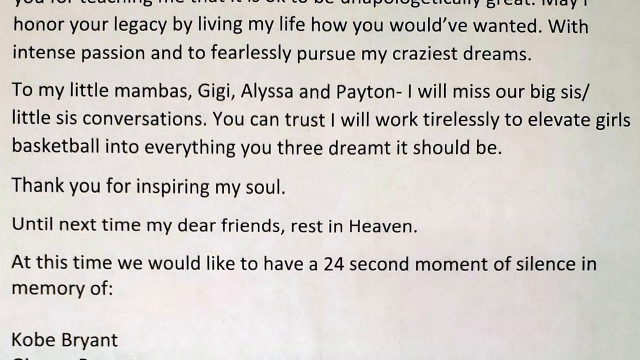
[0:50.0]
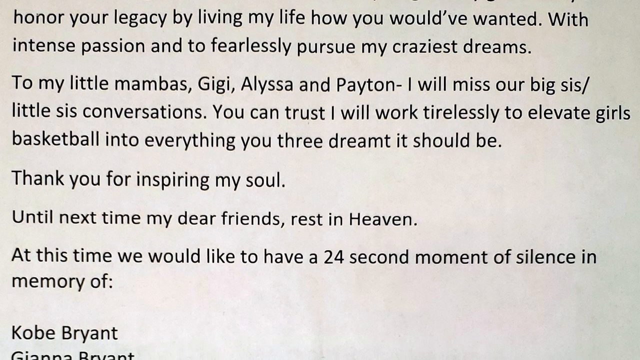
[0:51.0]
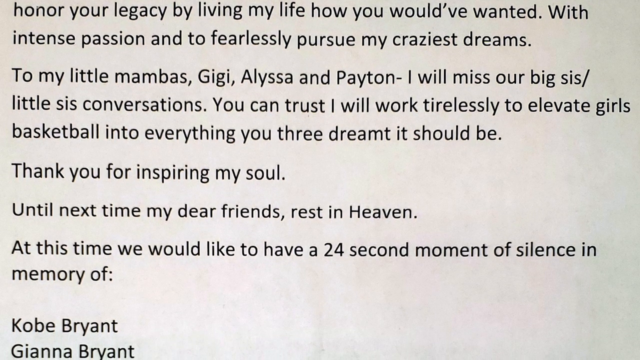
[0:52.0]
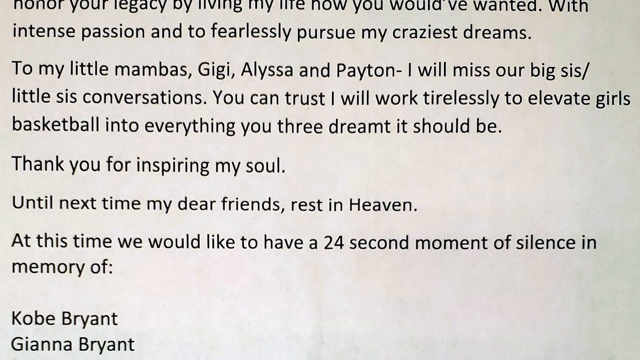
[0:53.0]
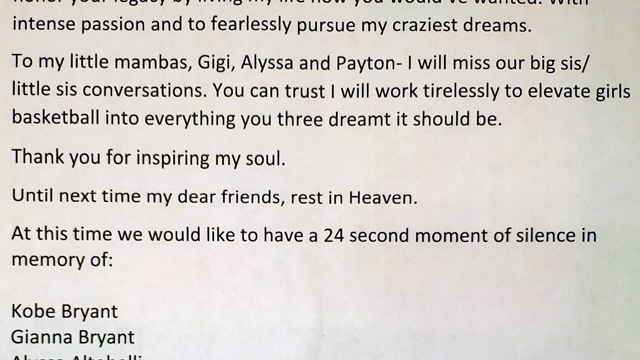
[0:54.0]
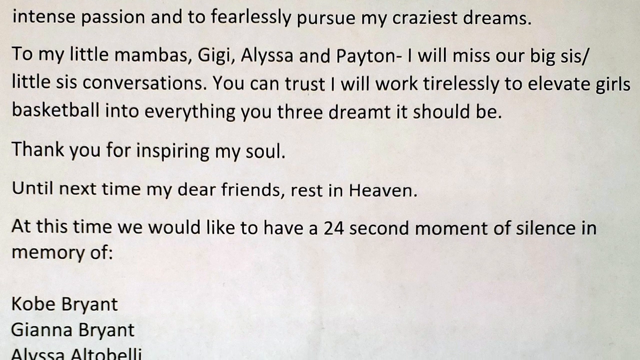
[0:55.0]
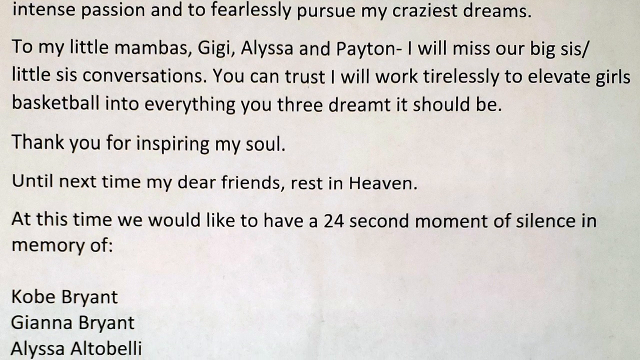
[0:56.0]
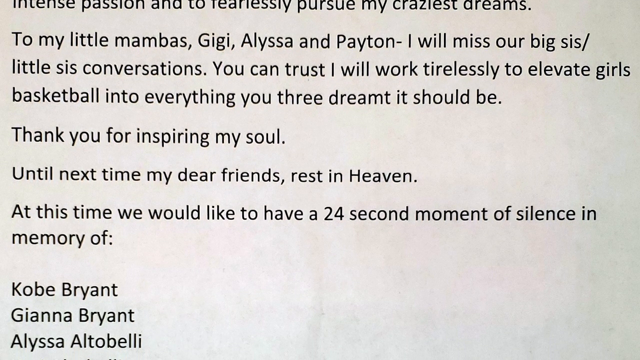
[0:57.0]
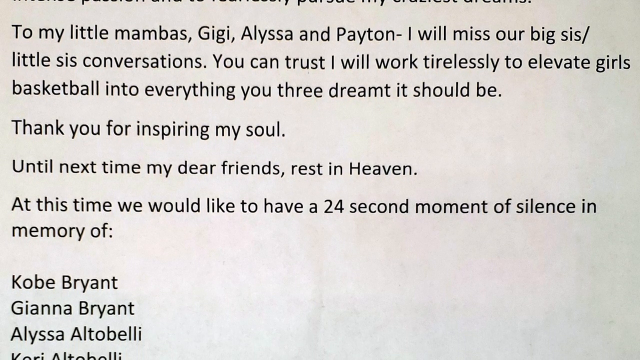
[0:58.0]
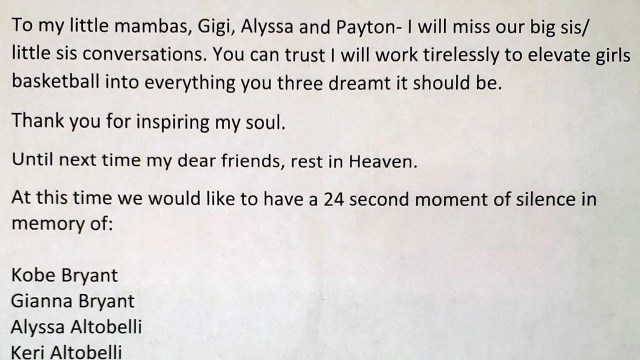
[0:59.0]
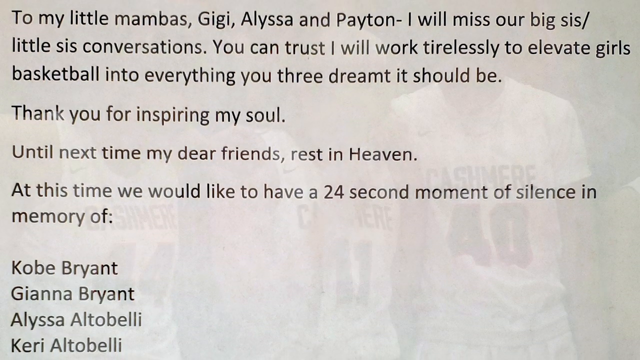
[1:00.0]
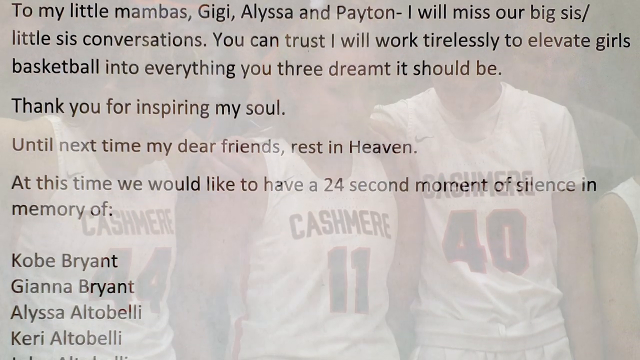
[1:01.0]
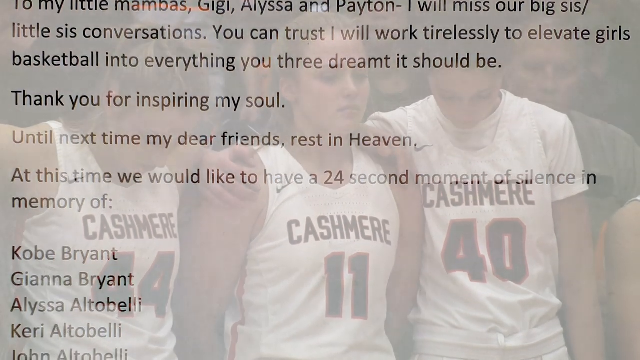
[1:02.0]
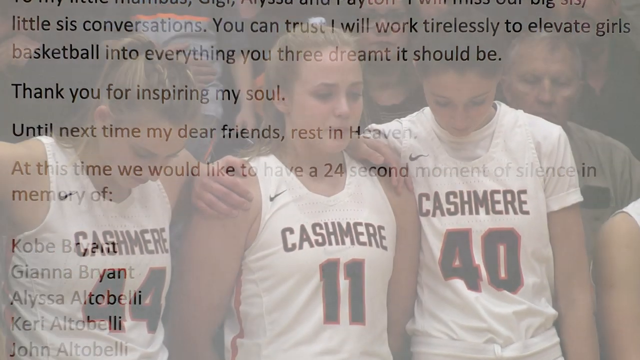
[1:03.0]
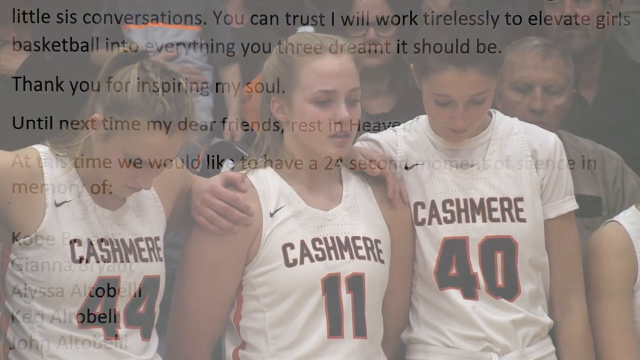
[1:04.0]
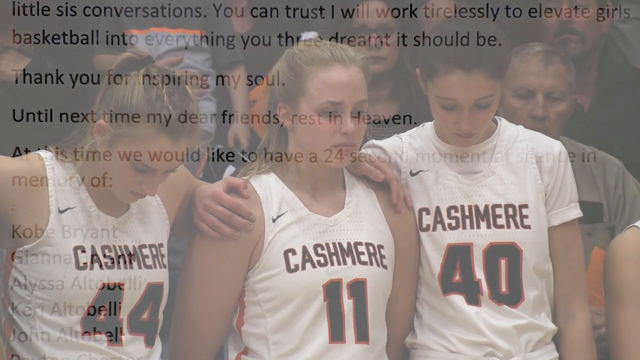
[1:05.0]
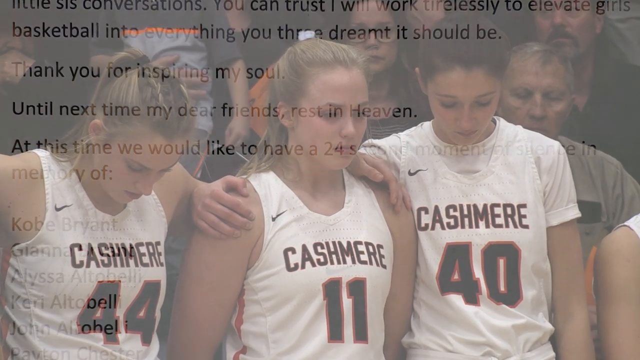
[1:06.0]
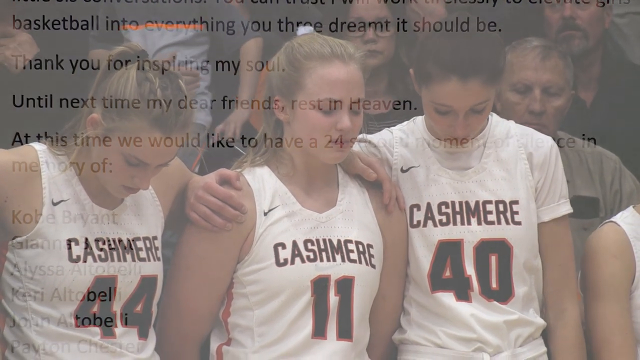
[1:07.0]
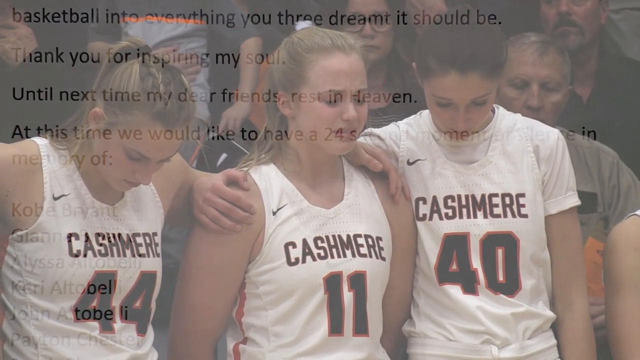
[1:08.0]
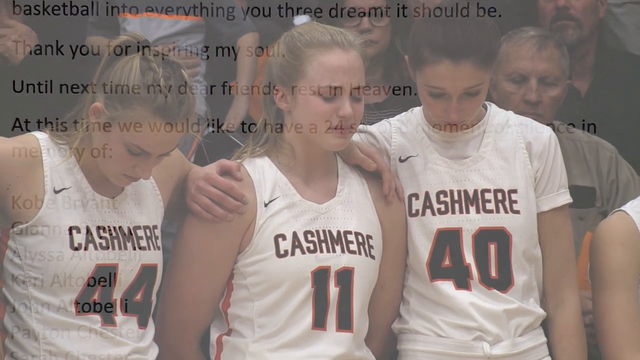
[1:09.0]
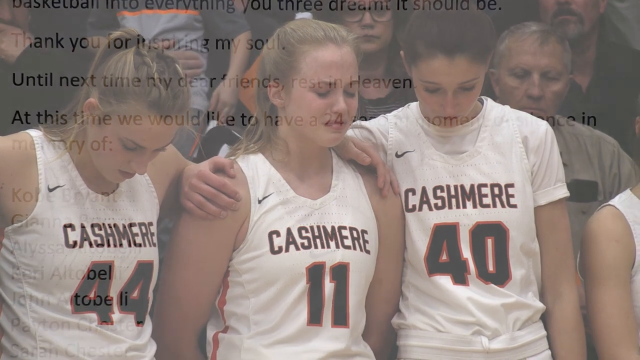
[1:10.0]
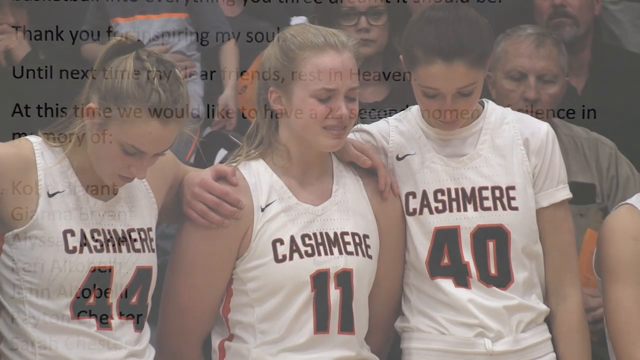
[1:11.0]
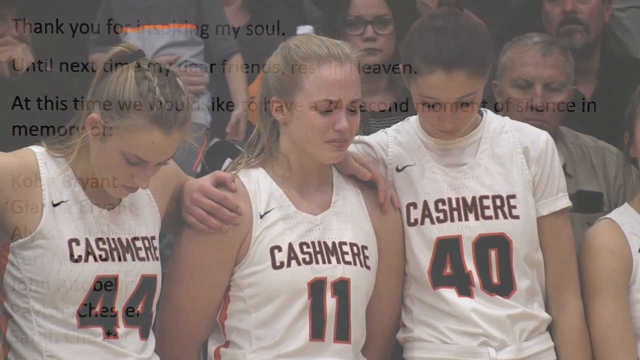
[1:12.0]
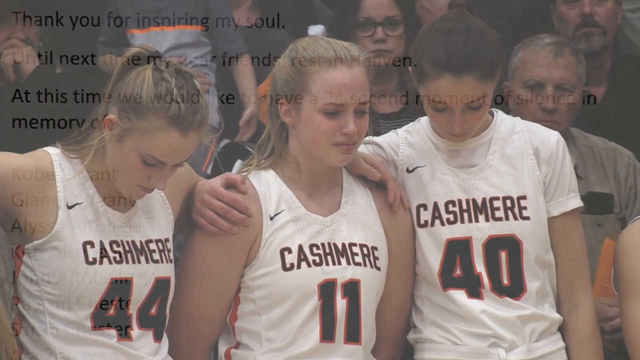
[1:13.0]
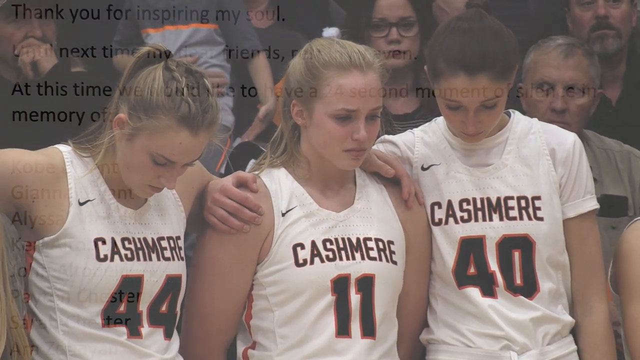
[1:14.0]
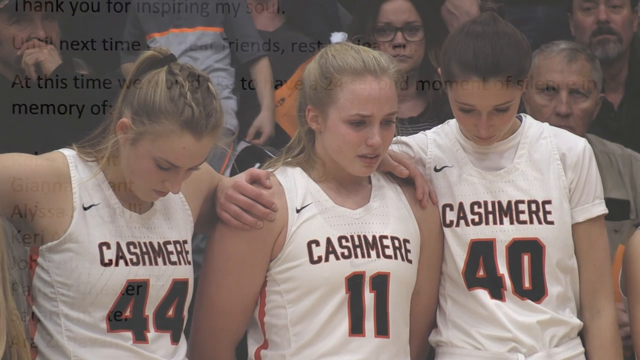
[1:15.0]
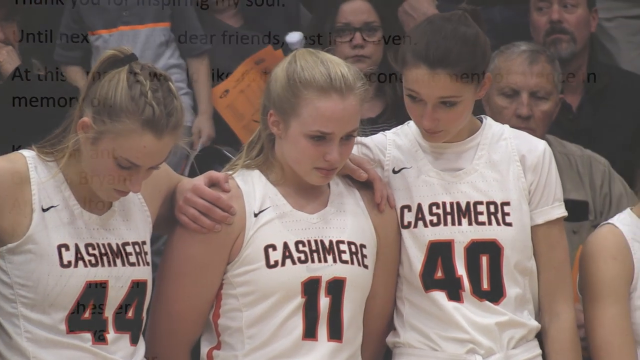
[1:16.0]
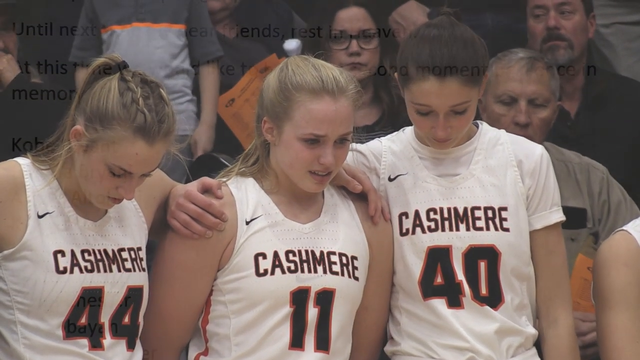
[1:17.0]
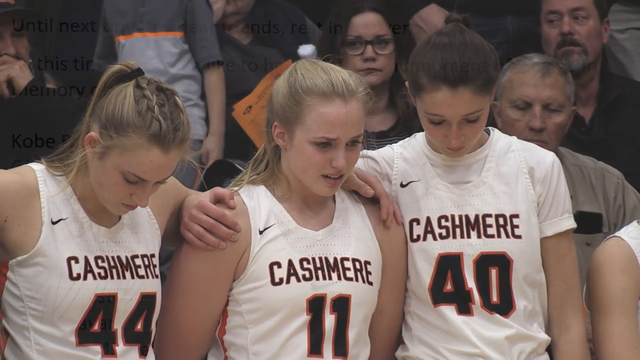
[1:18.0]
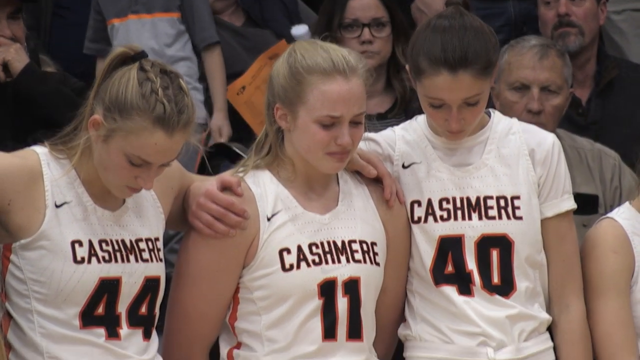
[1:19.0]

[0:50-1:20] The white background with black text, a written letter about Kobe and his daughters, is still shown as the camera slowly pans down from the top to the bottom of the document. The shot then very slowly transitions: the text remains visible in the background while three basketball players appear from the waist up on the sideline. The focal point is the one in the center, wearing number 11 and playing for Cashmere; somebody behind her has their hands on both her shoulders, and she is kind of crying and holding back tears. The two teammates on either side have their heads down; the one on the left is number 44 and the one on the right is number 40. It looks like there might be some kind of moment of silence. The shot then fully transitions to the players, and the letter is no longer visible in the background.